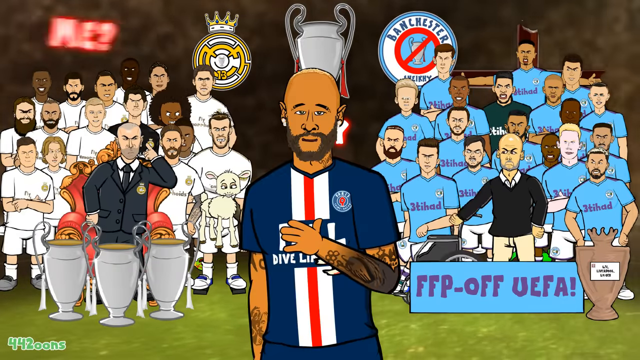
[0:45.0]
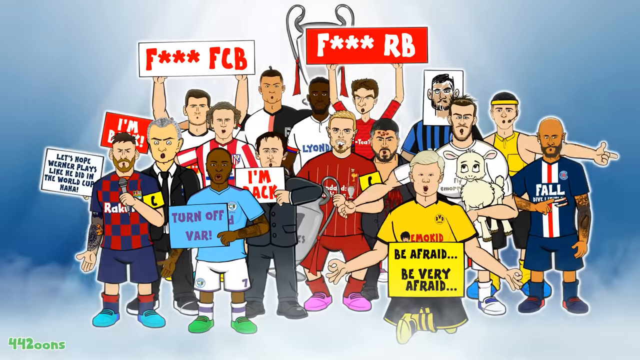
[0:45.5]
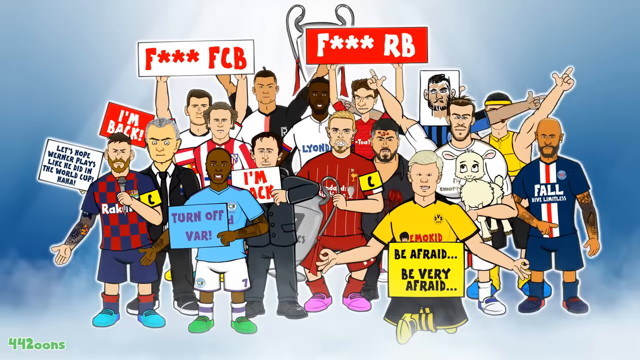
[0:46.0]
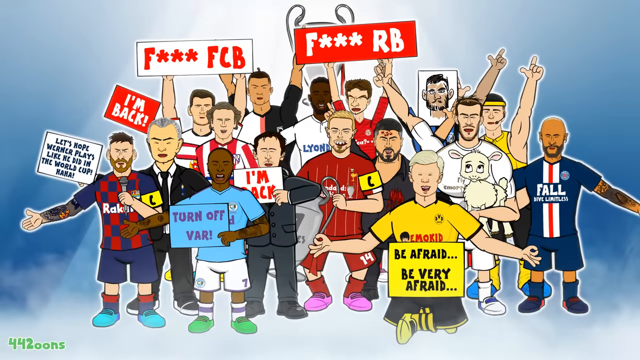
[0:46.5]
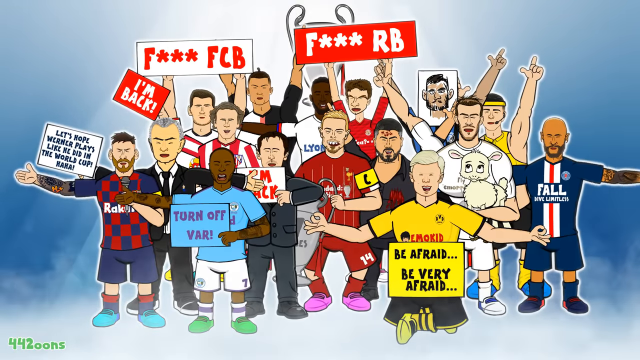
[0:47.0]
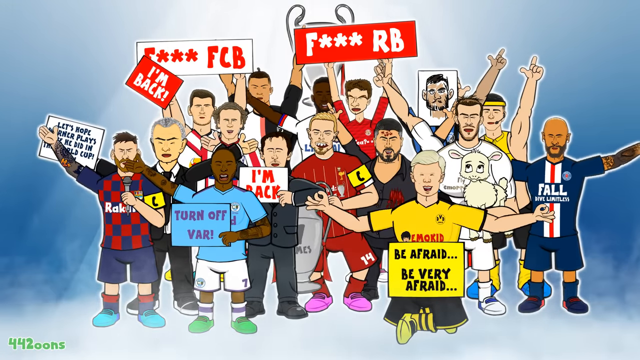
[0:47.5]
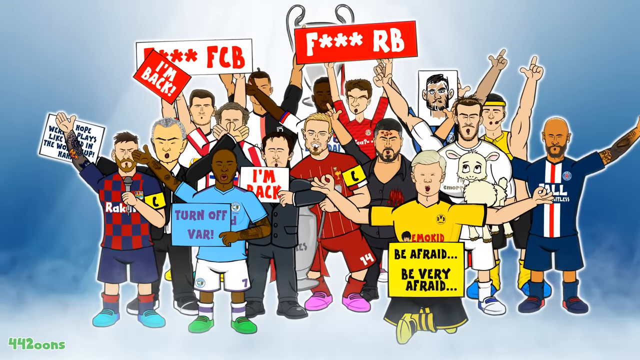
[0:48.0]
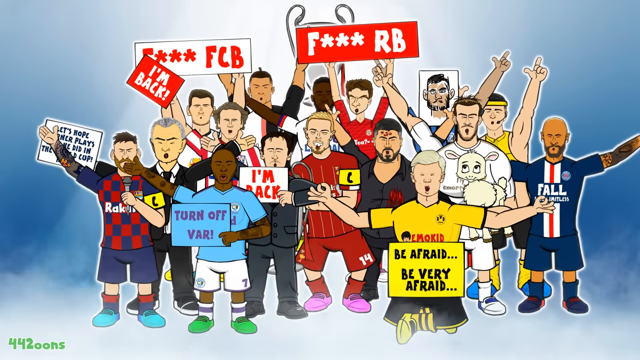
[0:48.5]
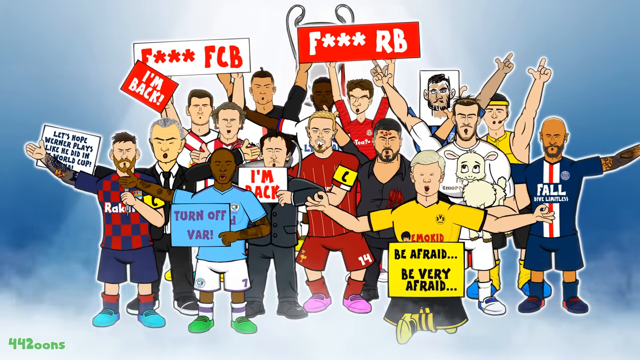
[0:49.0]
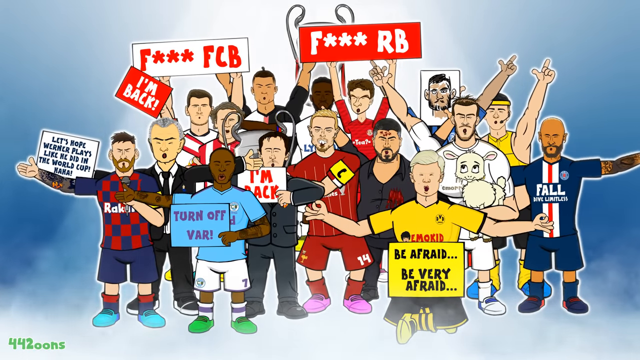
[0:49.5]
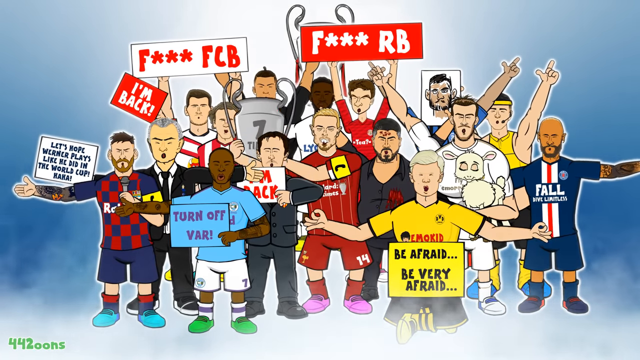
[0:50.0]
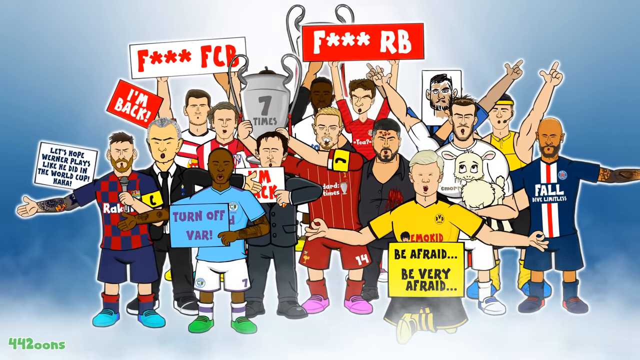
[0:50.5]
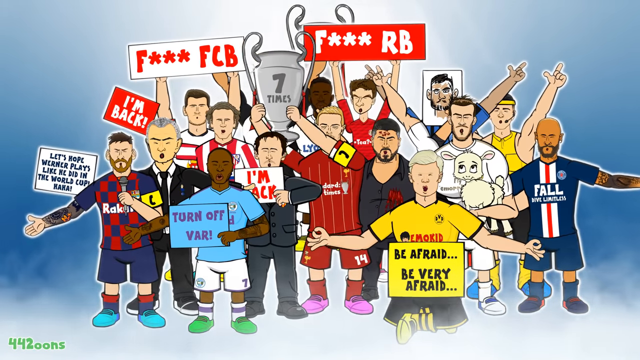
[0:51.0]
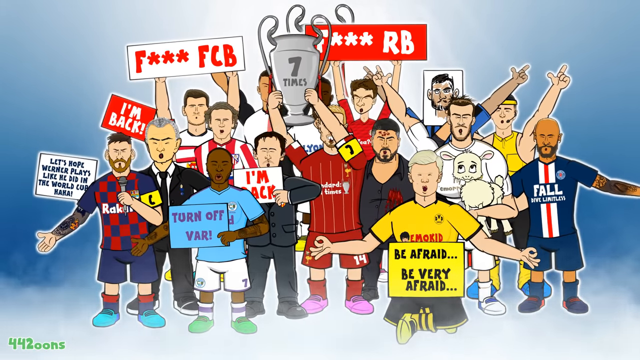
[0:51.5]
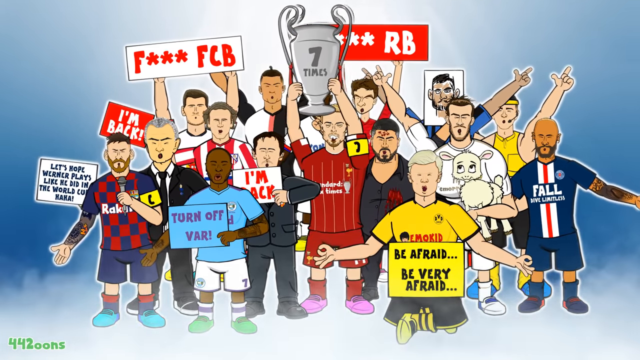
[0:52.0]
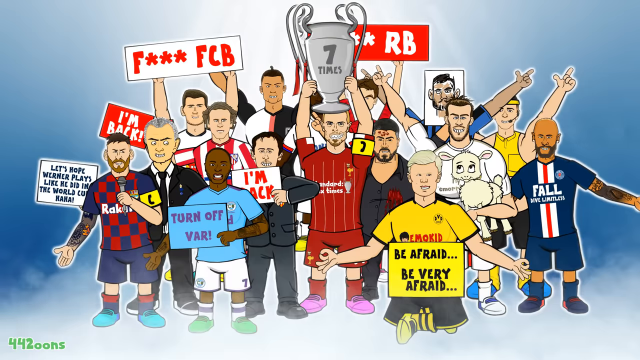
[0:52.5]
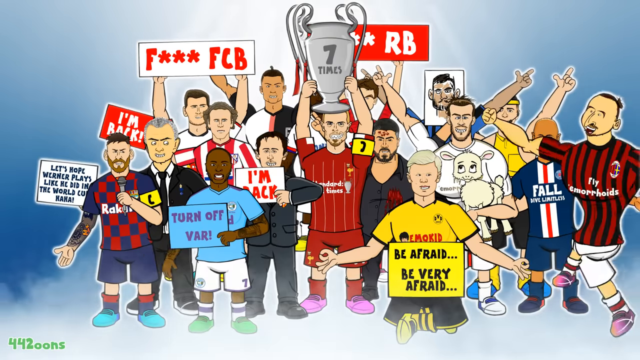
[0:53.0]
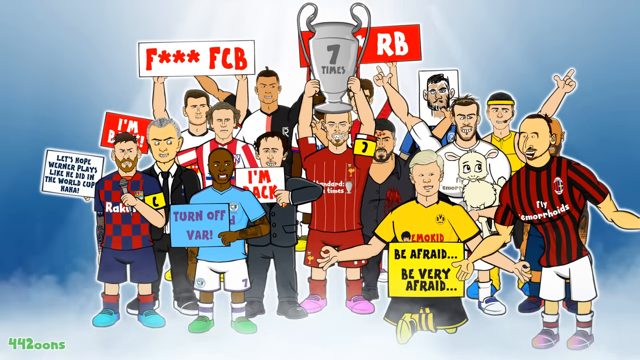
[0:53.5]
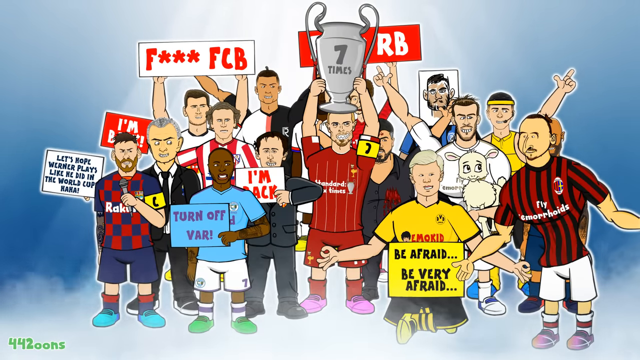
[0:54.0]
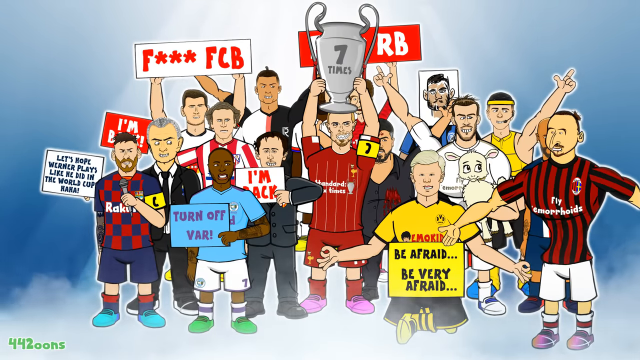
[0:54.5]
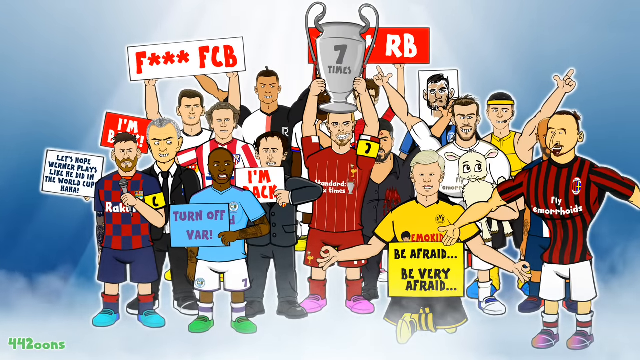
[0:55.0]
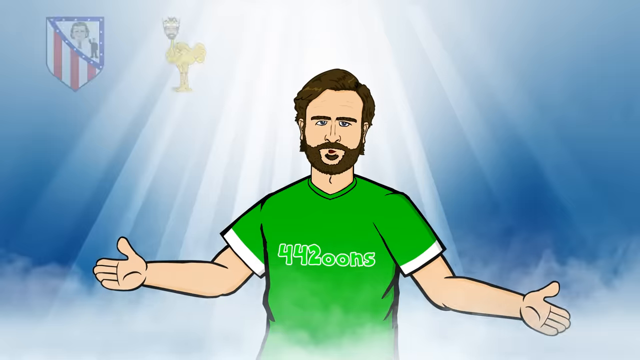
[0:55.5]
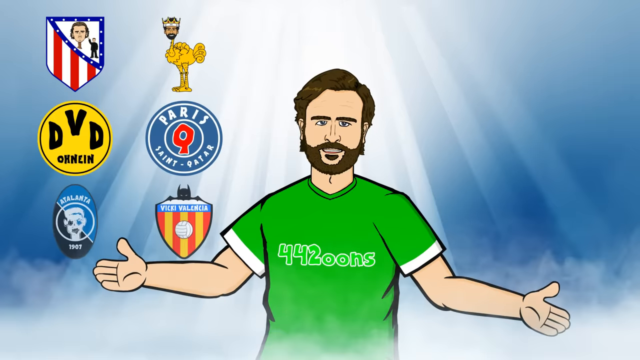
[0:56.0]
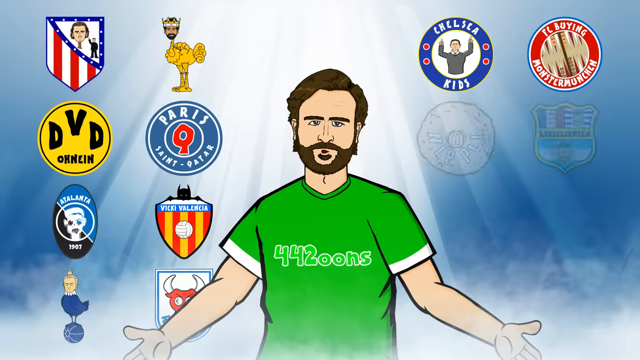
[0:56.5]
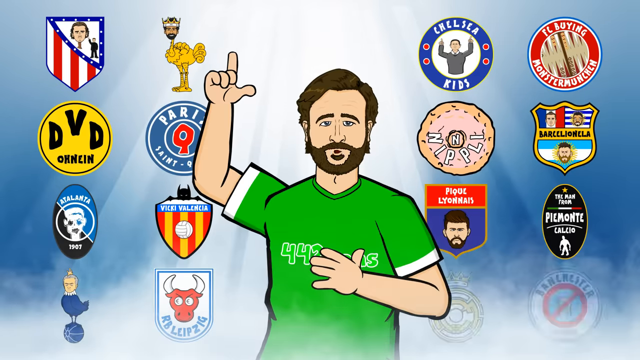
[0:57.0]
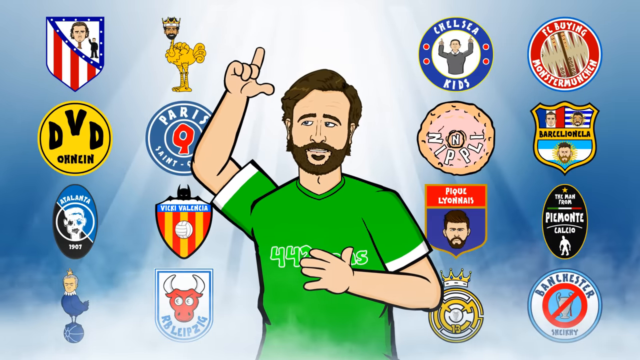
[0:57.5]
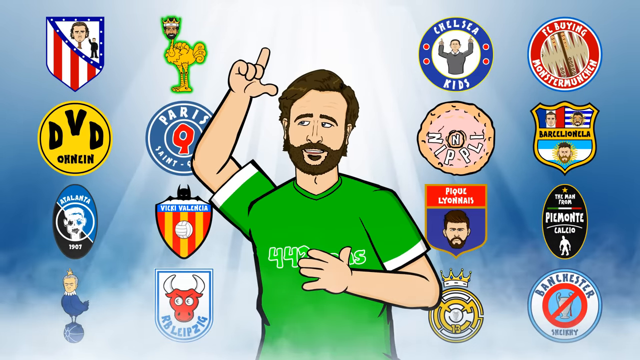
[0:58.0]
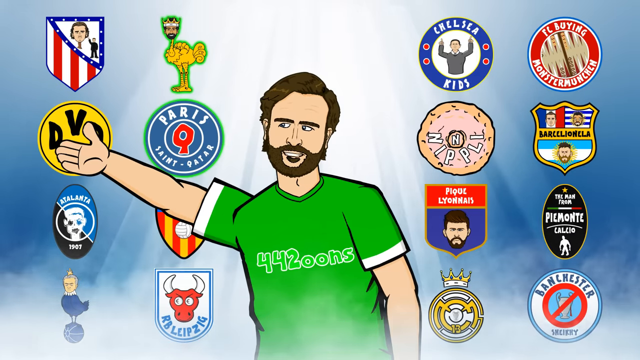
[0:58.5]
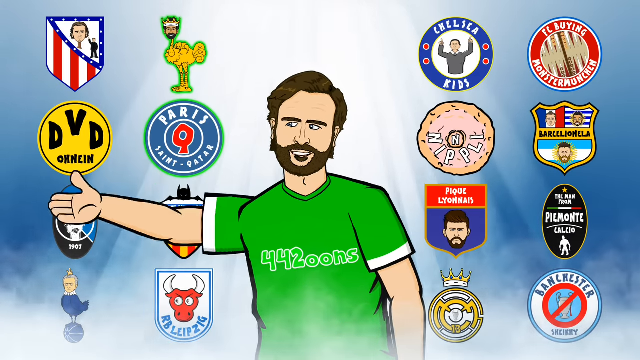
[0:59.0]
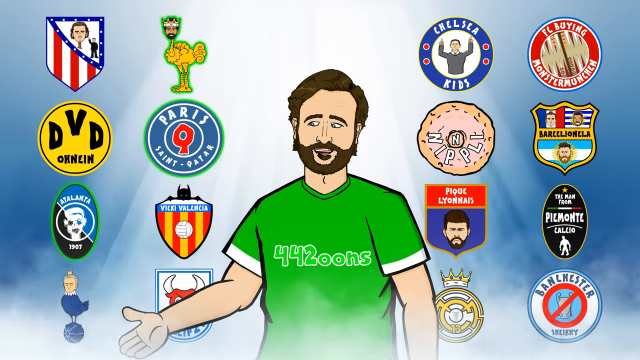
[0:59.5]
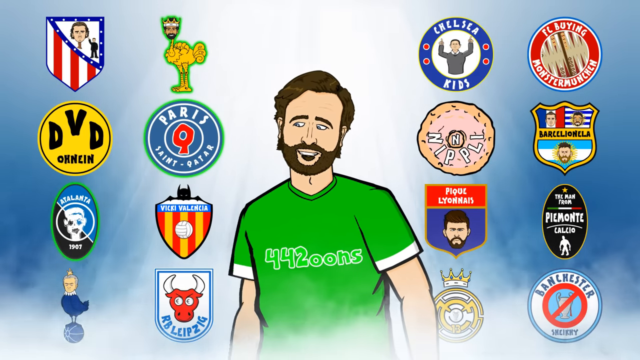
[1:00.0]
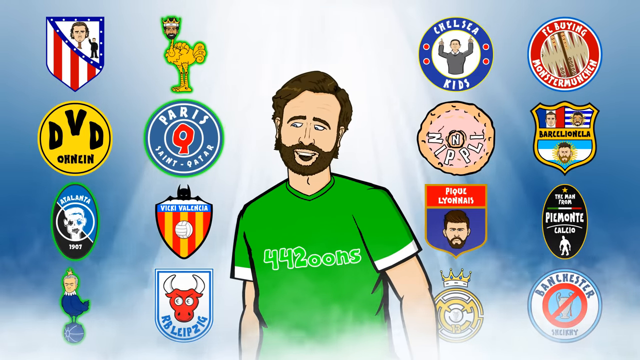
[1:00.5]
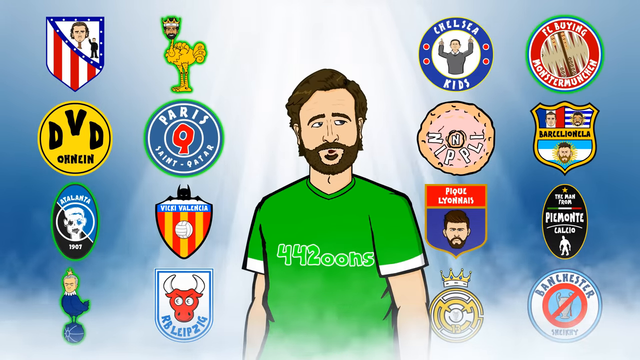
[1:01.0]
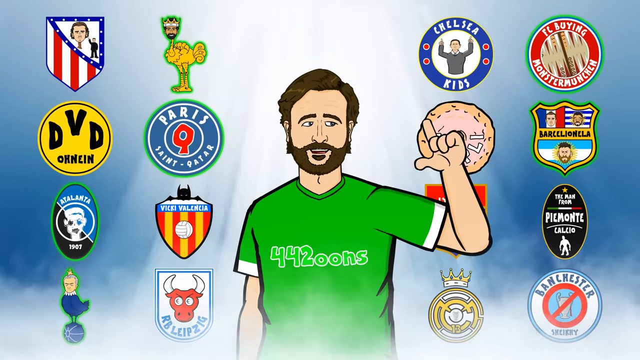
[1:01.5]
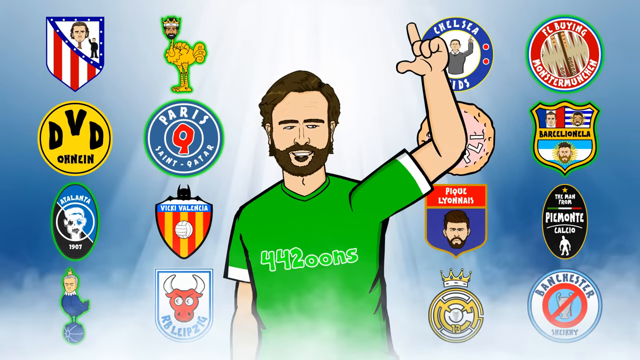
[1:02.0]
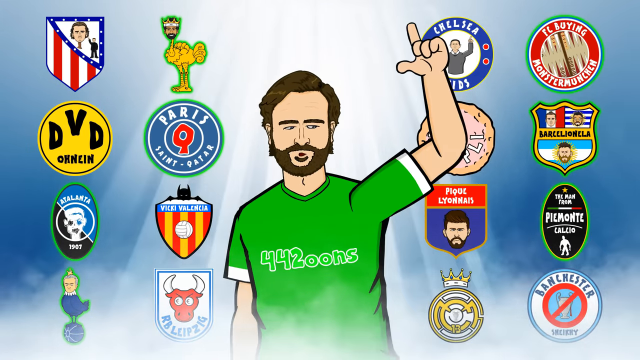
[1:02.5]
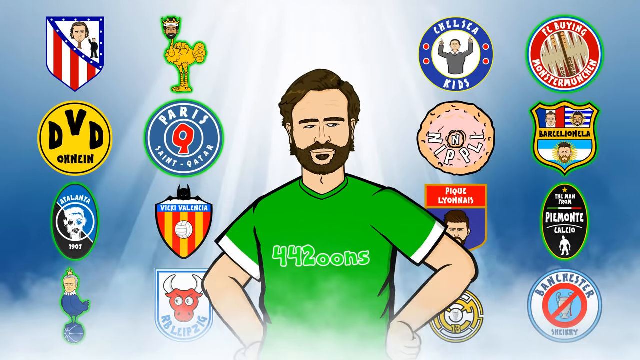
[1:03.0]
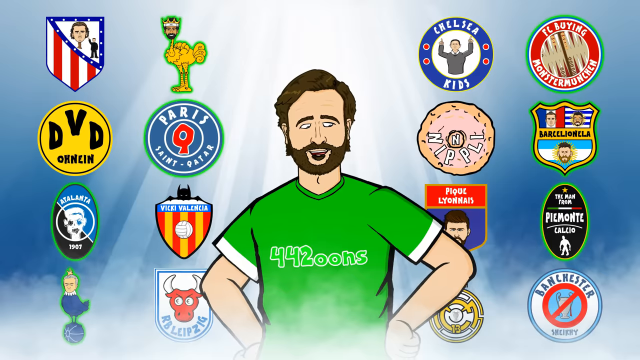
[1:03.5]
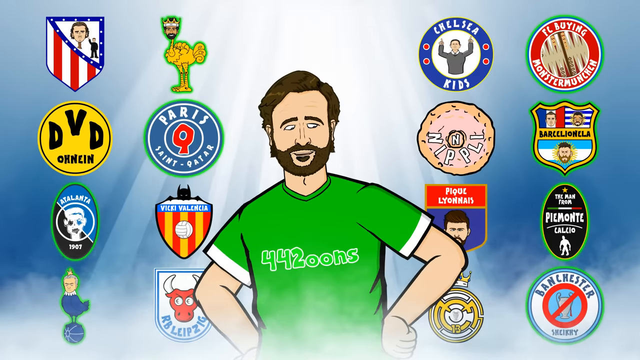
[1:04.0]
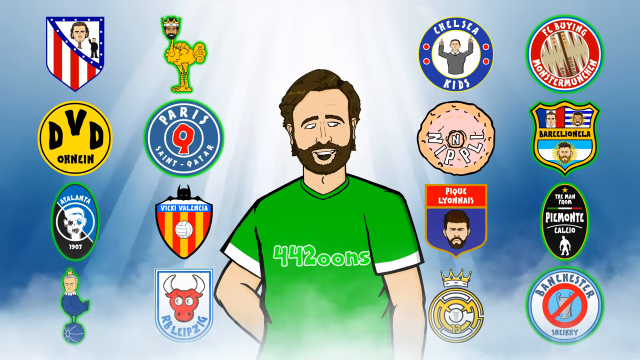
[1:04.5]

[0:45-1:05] A group of players from different teams, all in different jerseys, appear to be singing and raising their hands while holding up various signs. A player up front in a yellow jersey holds a sign saying "be afraid, be very afraid"; a player in a blue jersey has a sign saying "turn off bar"; and a player in a checkered jersey has a sign saying "let's hope Werner plays like he did in the World Cup. Ha-ha". A very muscular guy in a red and black striped jersey, who looks like Ibrahimovic, comes running in; his jersey says "fly hemorrhoids", and he appears to be talking to them. It then cuts to a guy in a green jersey surrounded by a bunch of different badges all over the screen, against a cloudy blue background. He has his right arm up and his left arm against his chest, and he appears to be pointing to the different badges as he talks. It then cuts back to the players from different clubs singing, which appears to be comedic, though what they are saying cannot be told.